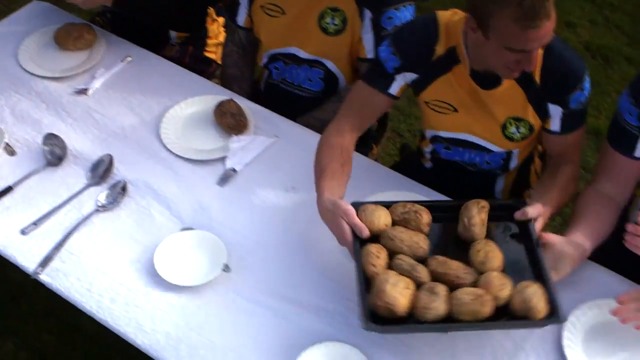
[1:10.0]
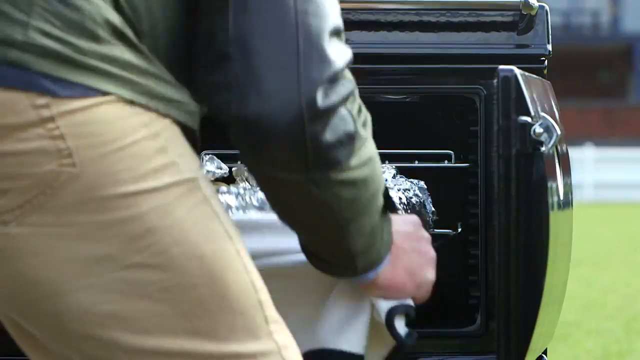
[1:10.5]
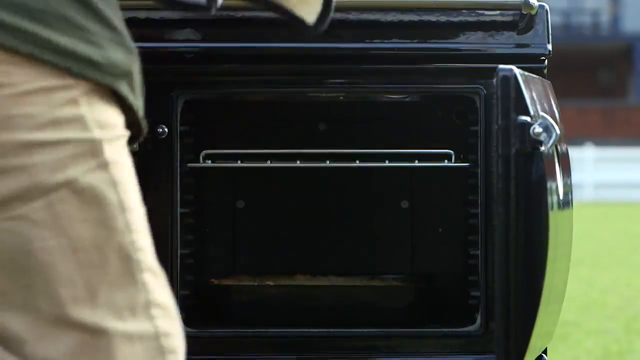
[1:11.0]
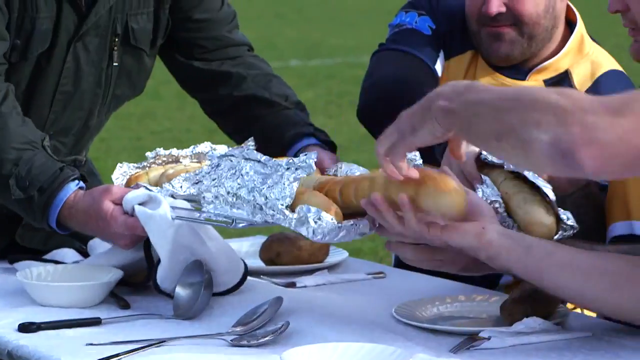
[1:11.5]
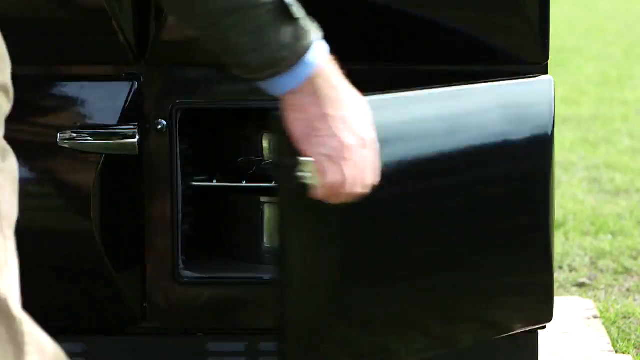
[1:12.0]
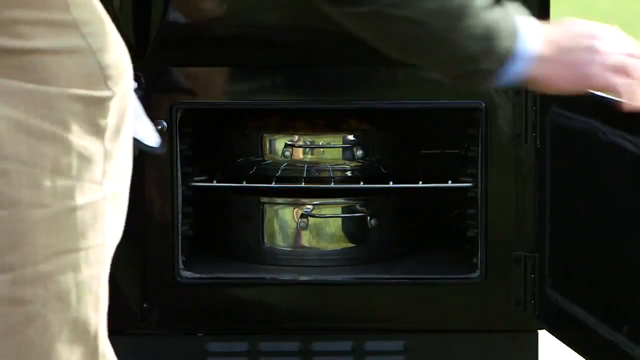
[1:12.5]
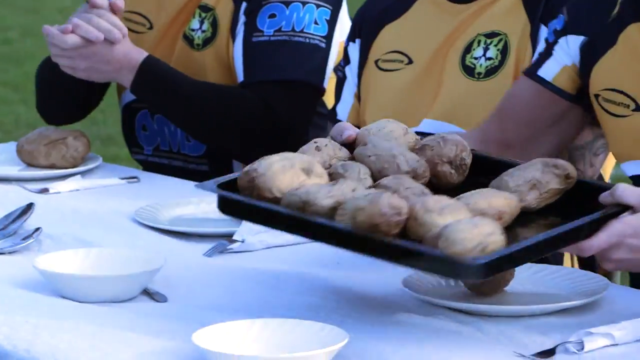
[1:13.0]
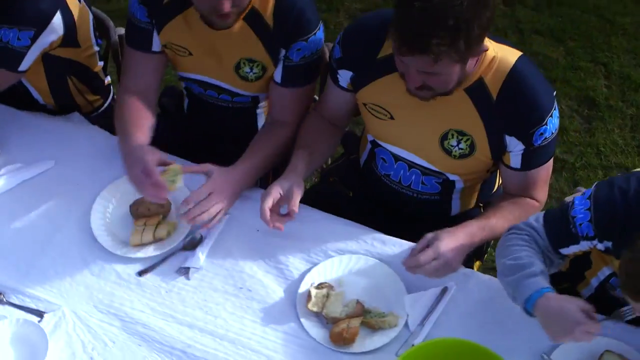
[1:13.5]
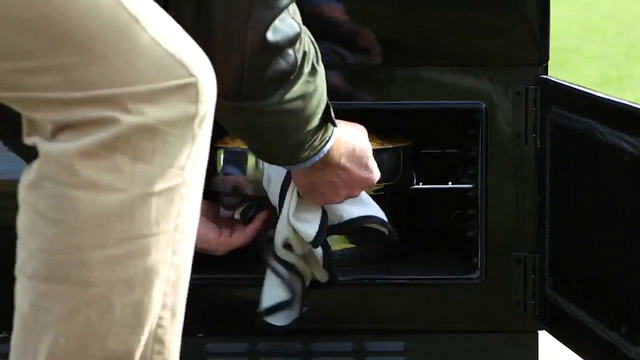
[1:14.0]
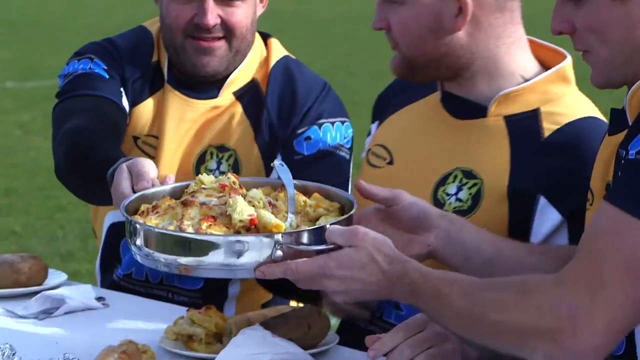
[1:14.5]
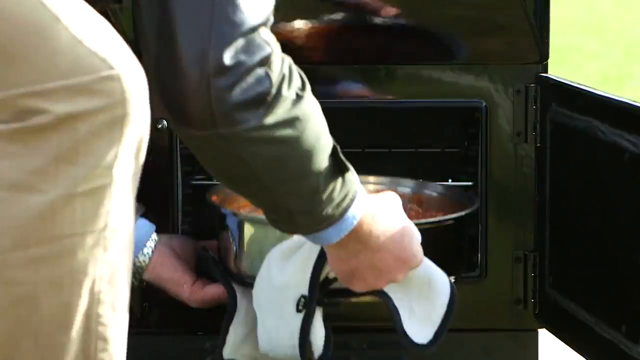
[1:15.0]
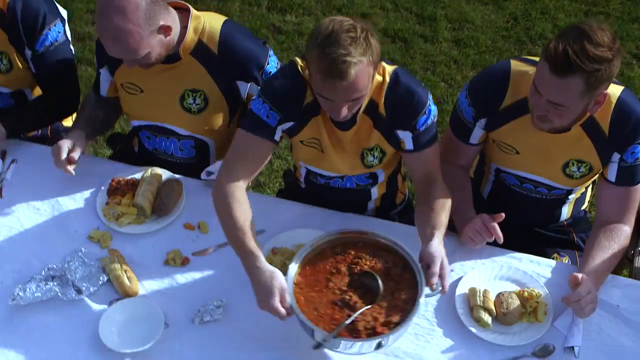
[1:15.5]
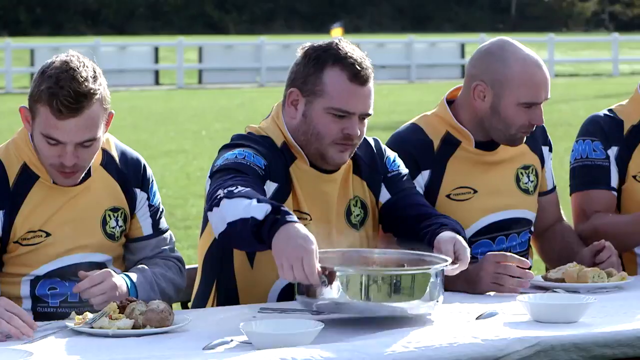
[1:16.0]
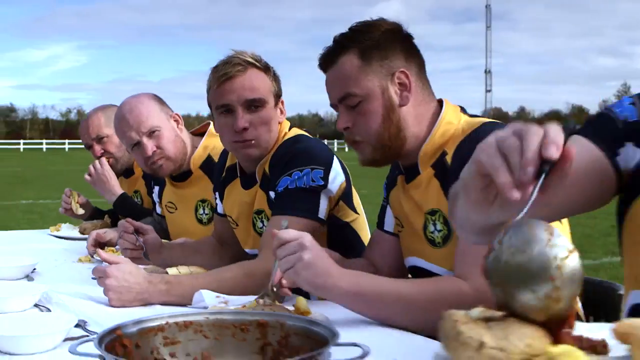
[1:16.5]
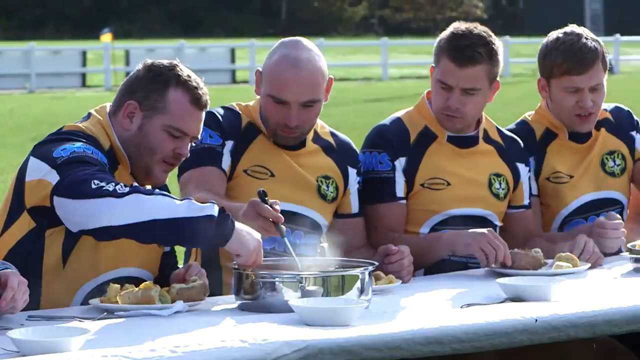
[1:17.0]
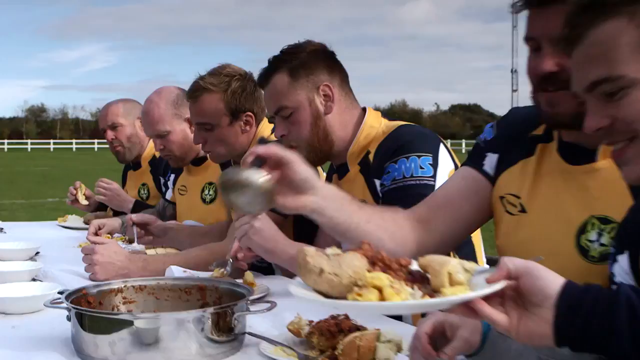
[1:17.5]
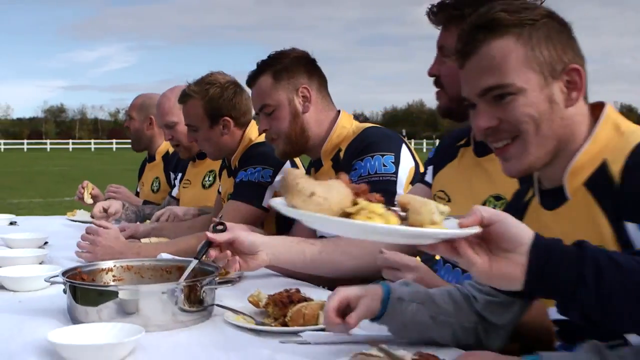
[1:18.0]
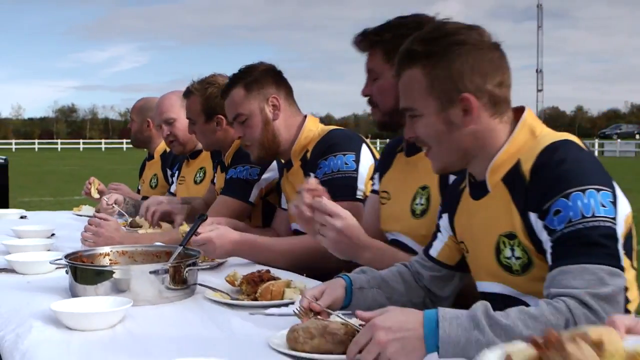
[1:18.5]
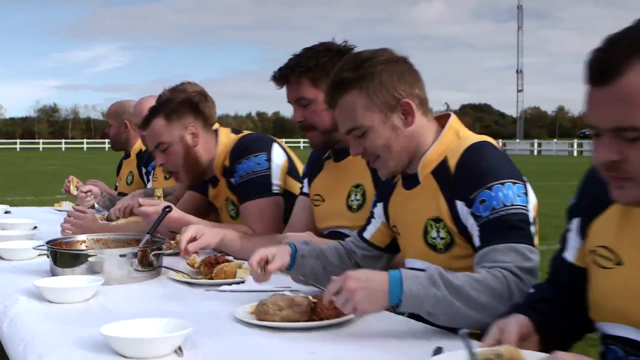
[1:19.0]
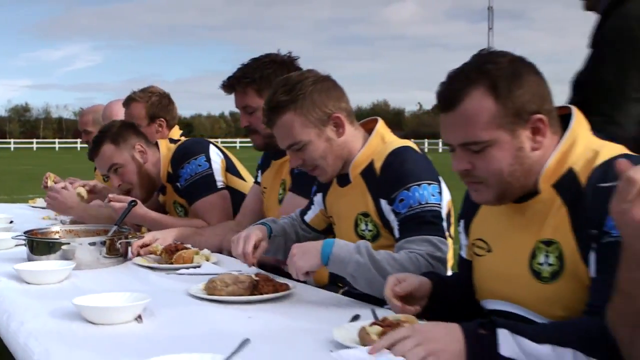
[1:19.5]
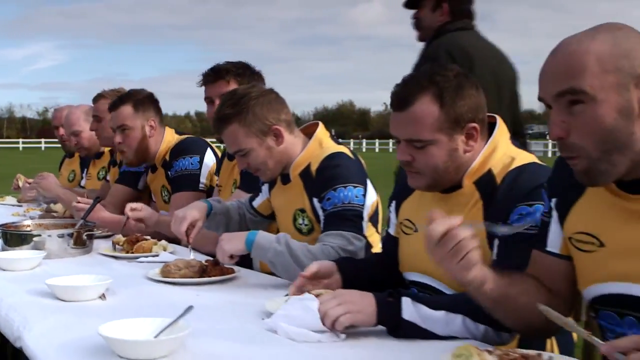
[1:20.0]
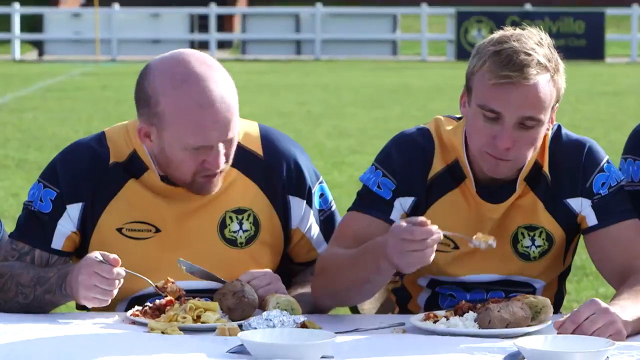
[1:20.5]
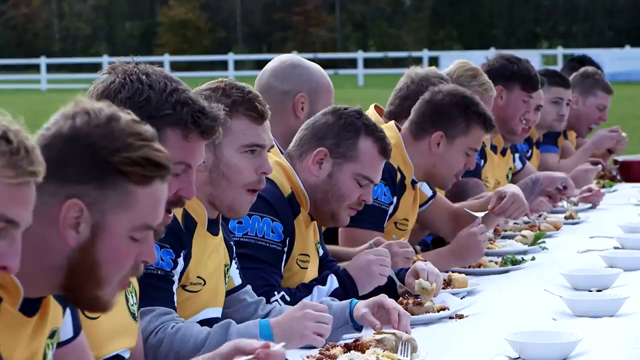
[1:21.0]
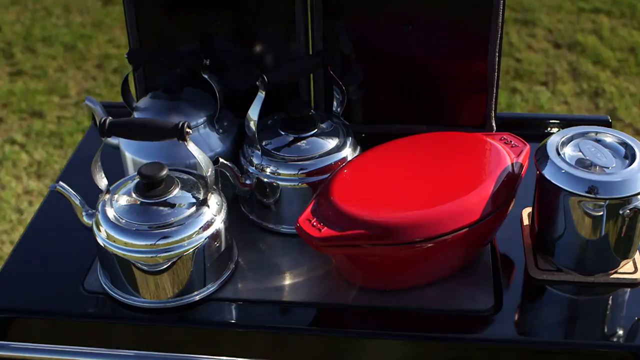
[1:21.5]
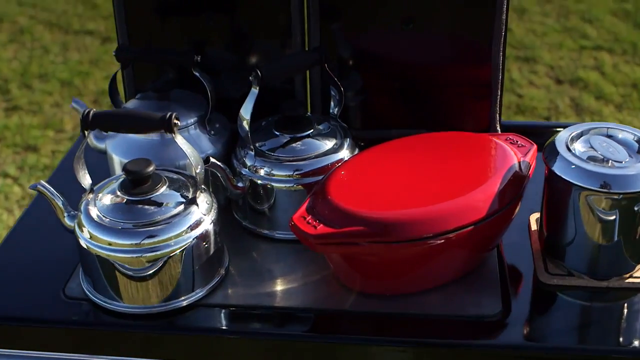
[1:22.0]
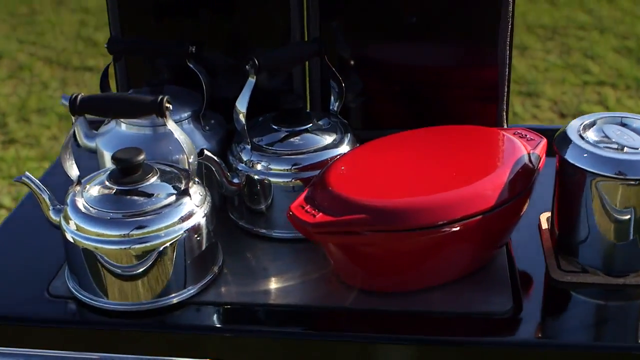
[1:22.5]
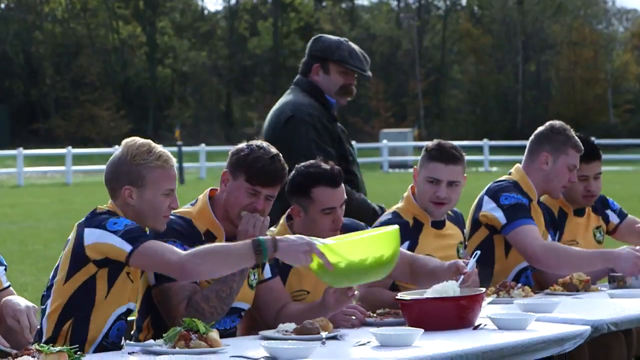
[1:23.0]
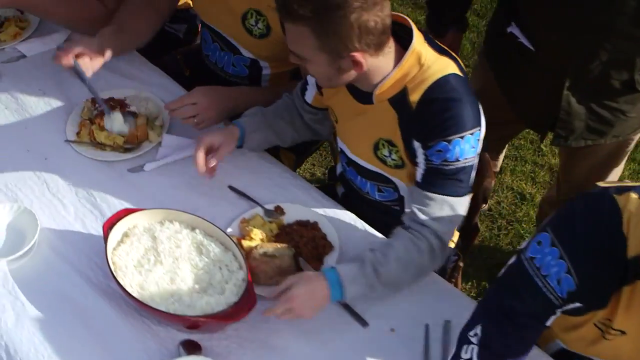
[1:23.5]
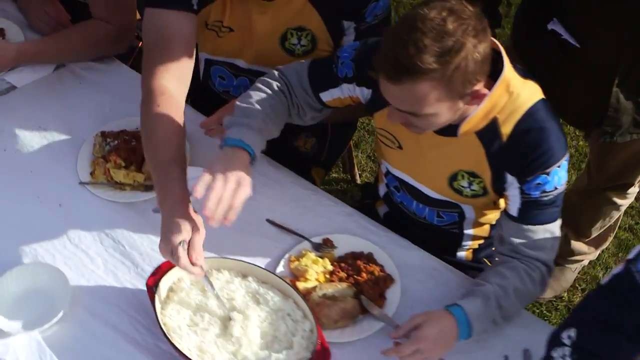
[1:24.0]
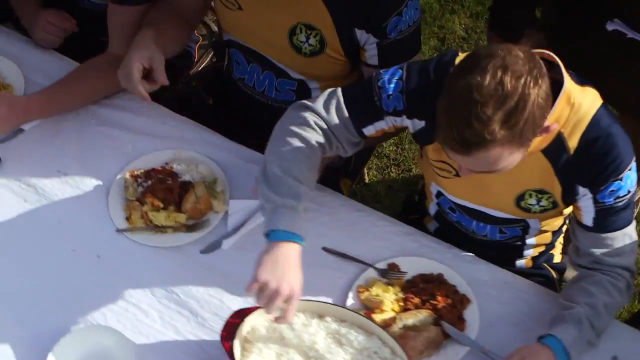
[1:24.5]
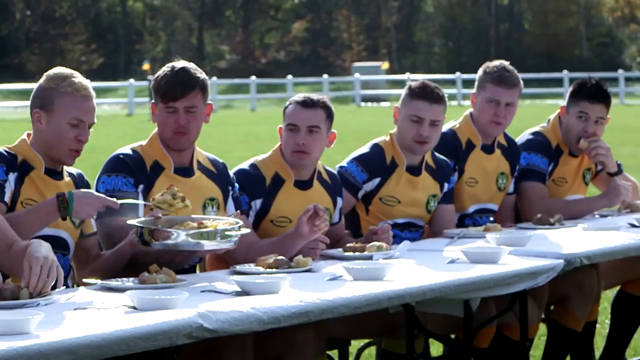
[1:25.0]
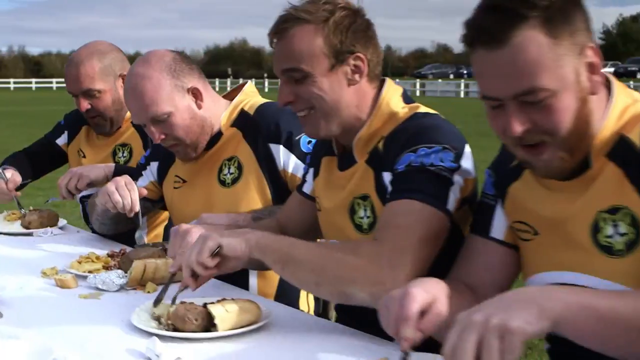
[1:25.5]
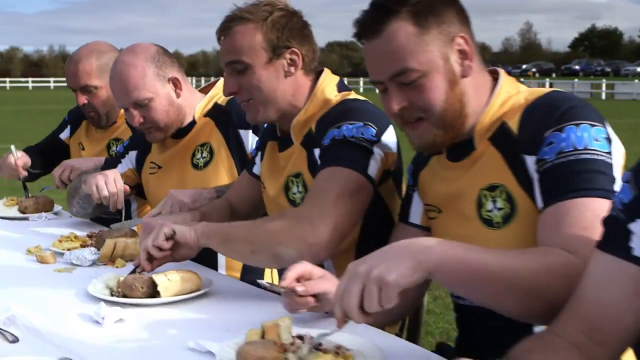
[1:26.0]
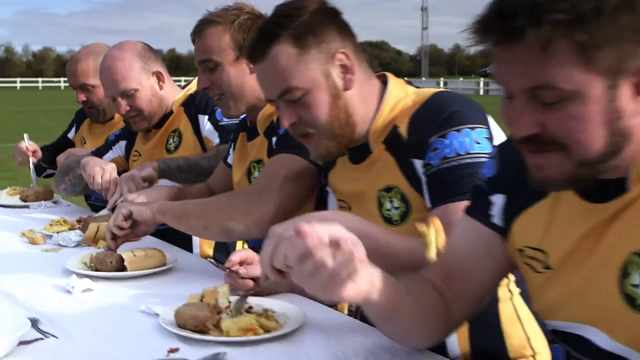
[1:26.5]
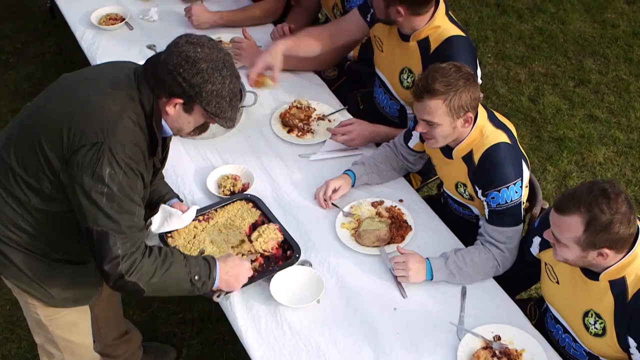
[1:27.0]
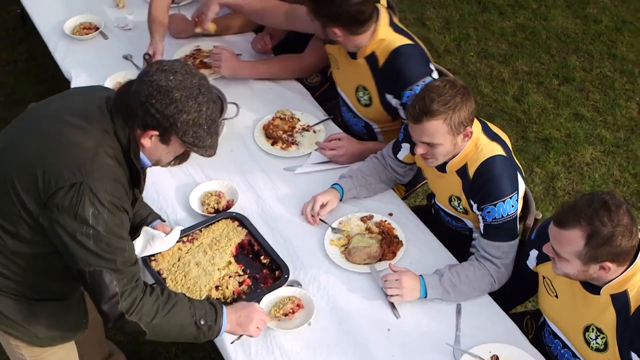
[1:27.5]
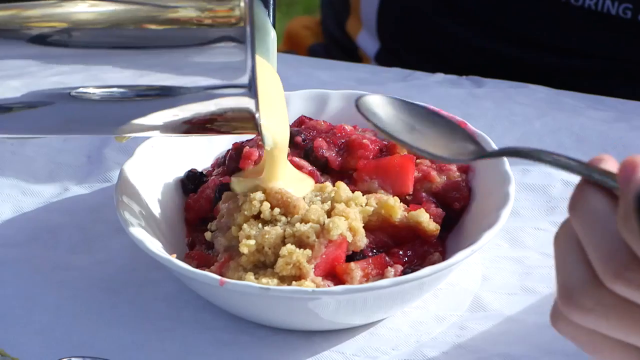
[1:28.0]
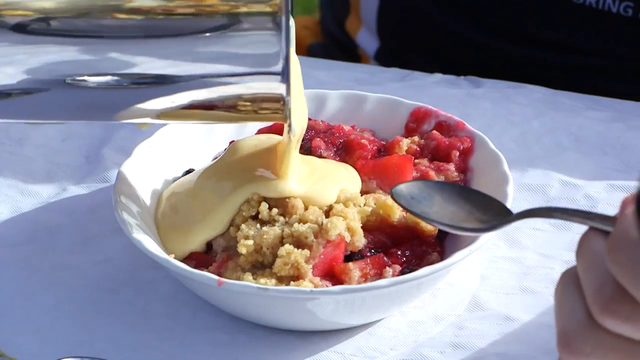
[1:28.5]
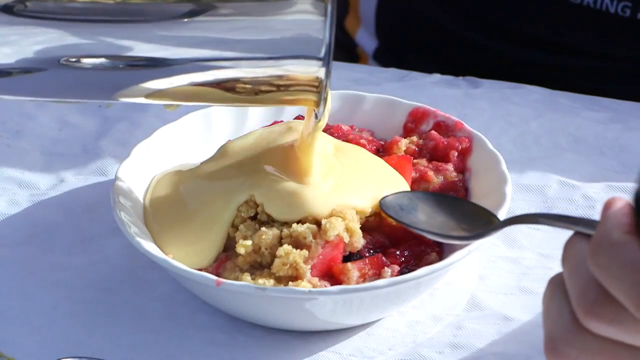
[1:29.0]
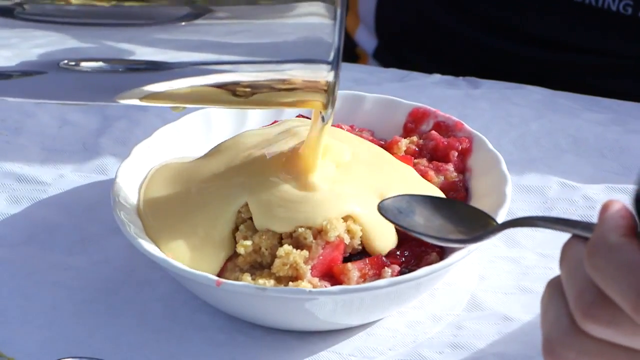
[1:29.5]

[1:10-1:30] Seen from a high vantage point looking down at a table, a whole plate of potatoes is passed down the table. The front of the metal grill-like device is shown with its door open as the man takes out the potatoes. A straight view of the table shows several rugby players sitting down, one holding the plate of potatoes while others each grab one for themselves. The potatoes are passed down along with what looks to be some pasta. From the front of the table, the camera zooms down over the seated rugby players grabbing food and putting it on their plates. Finally, the view looks directly down at the table, which has white paper plates, baked potatoes and some kind of pasta dishes.